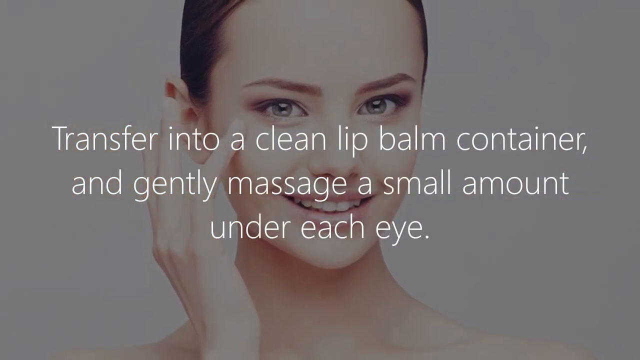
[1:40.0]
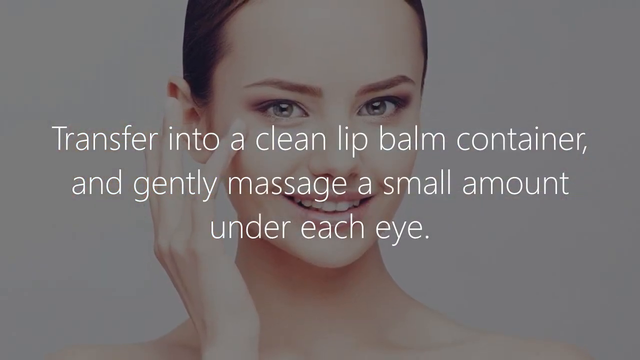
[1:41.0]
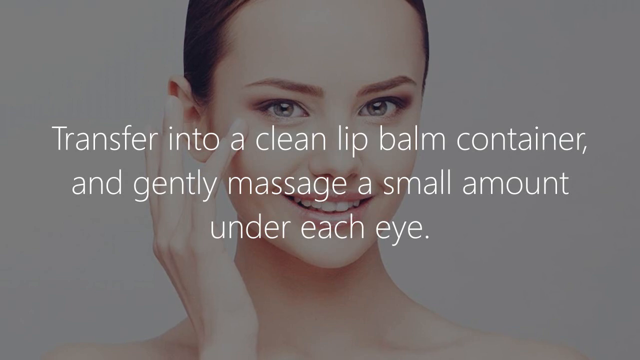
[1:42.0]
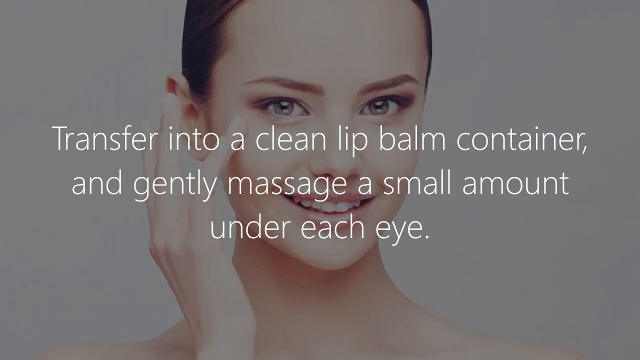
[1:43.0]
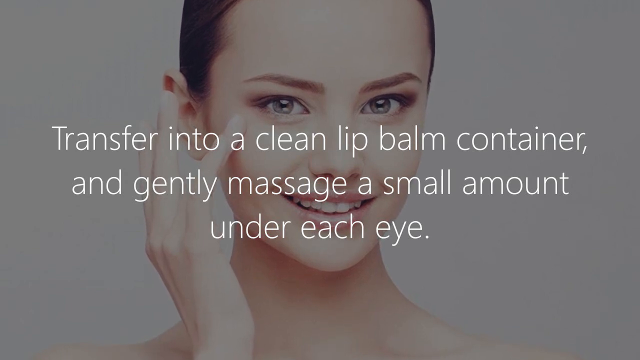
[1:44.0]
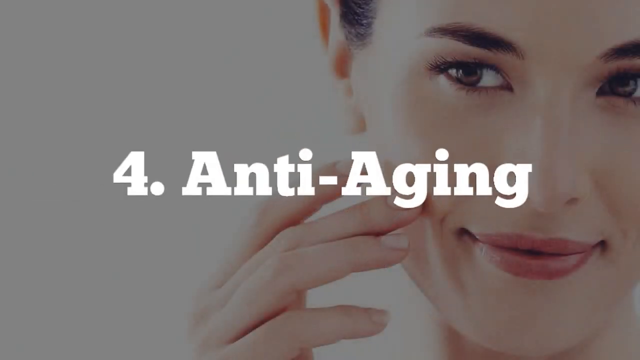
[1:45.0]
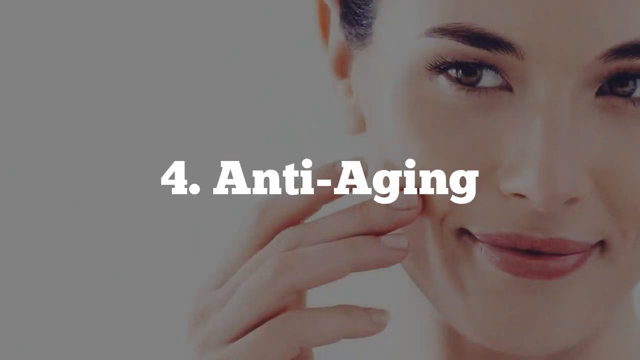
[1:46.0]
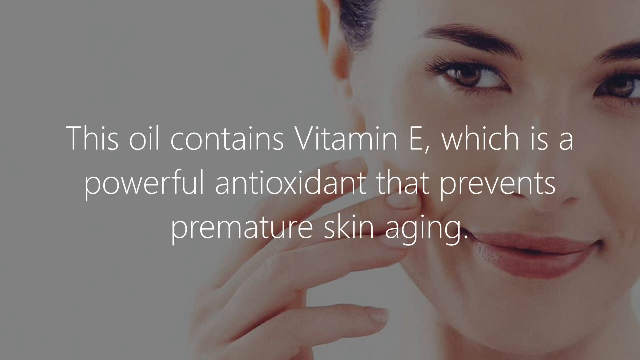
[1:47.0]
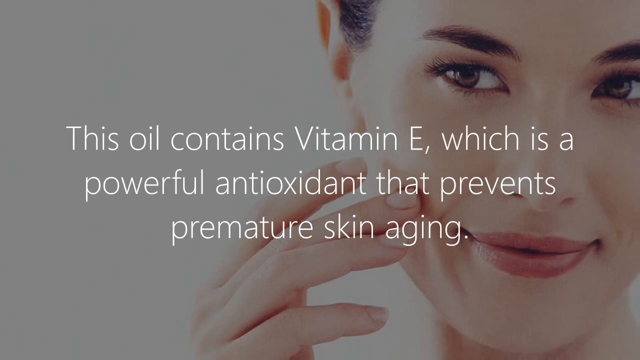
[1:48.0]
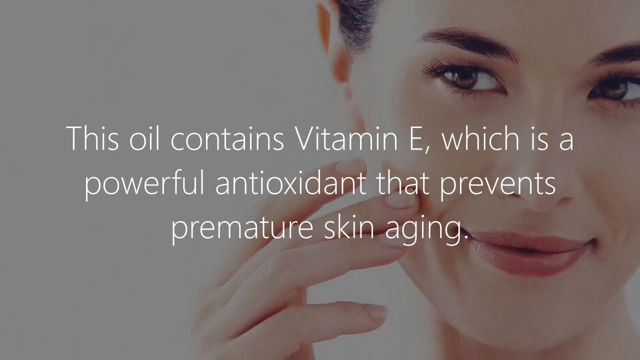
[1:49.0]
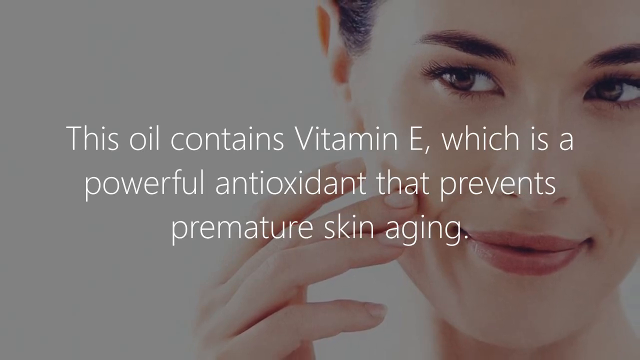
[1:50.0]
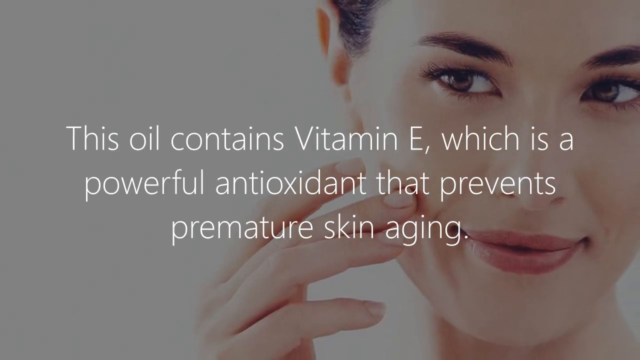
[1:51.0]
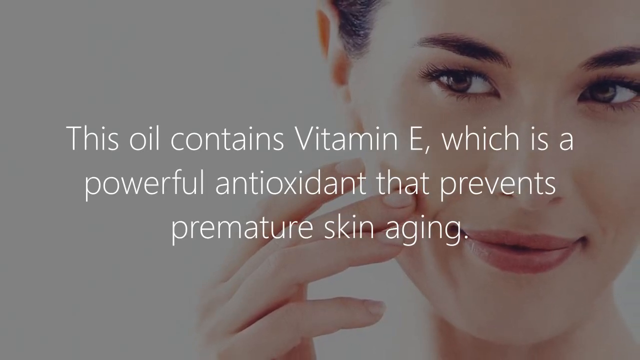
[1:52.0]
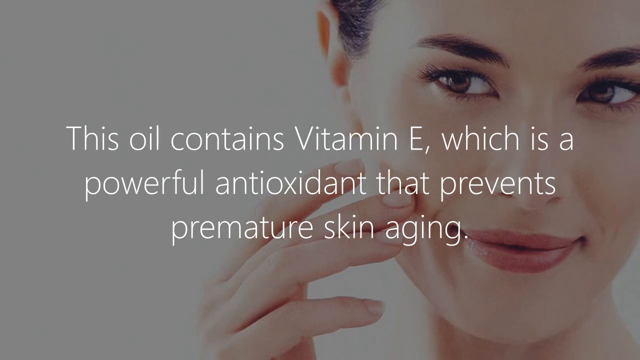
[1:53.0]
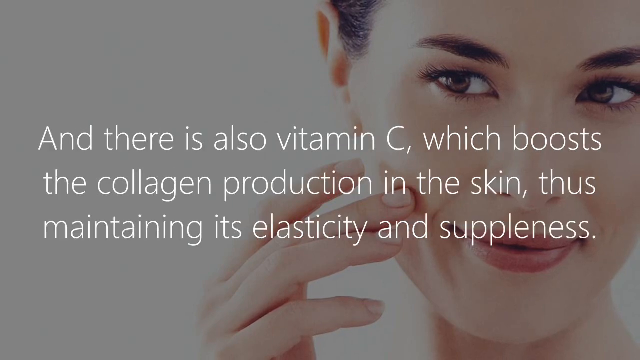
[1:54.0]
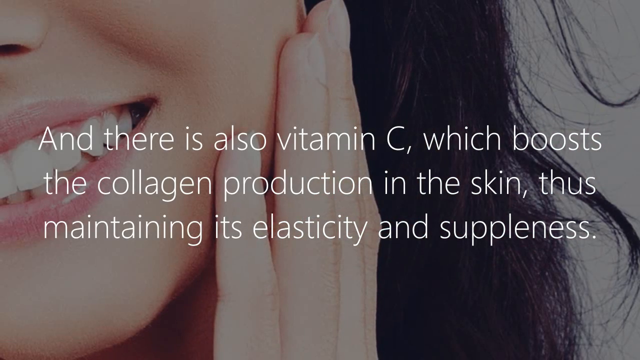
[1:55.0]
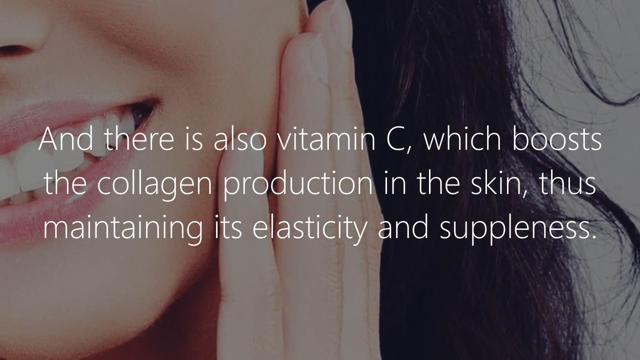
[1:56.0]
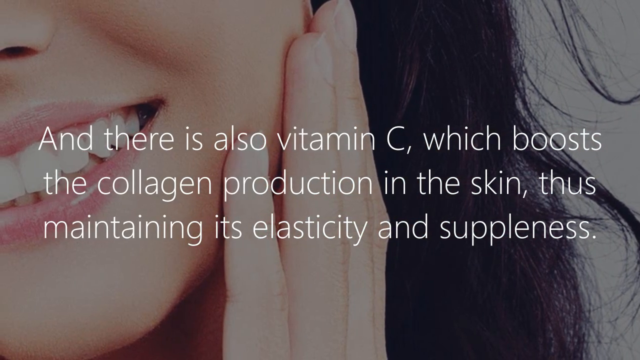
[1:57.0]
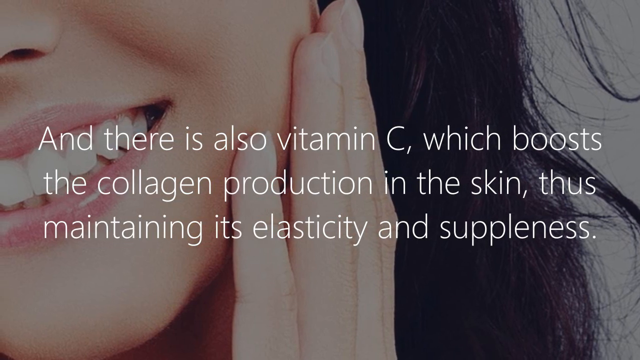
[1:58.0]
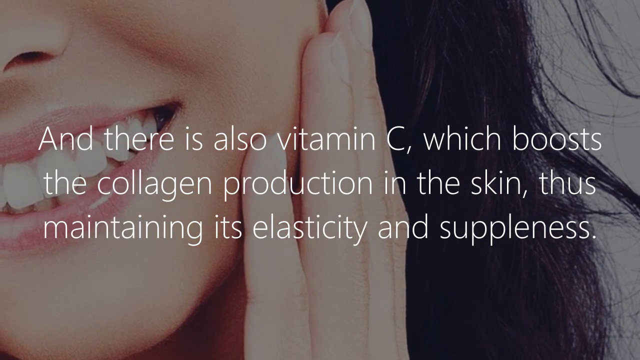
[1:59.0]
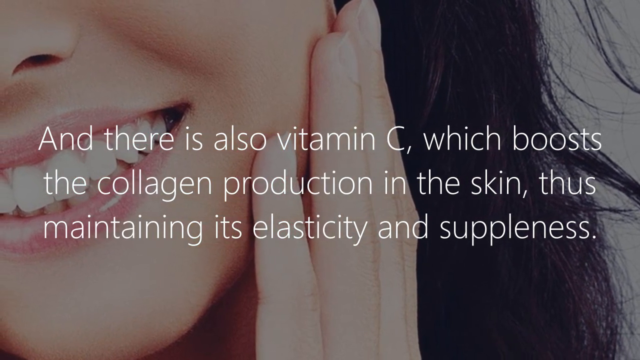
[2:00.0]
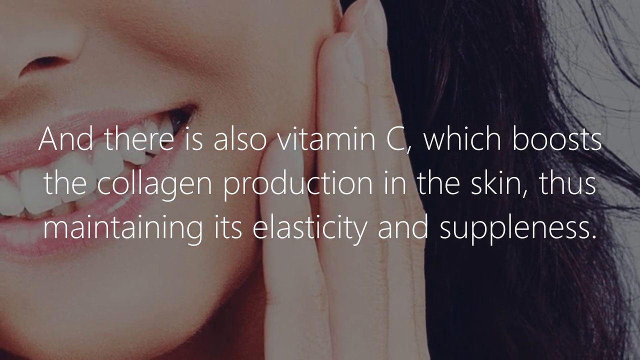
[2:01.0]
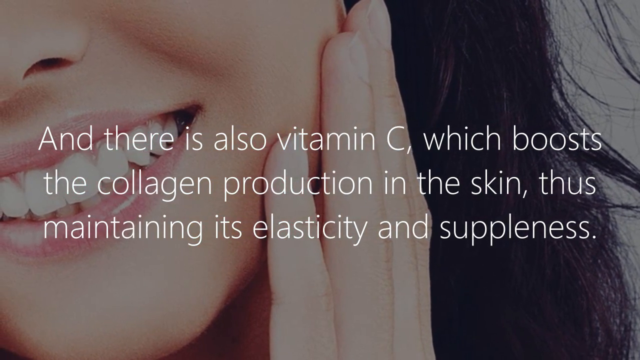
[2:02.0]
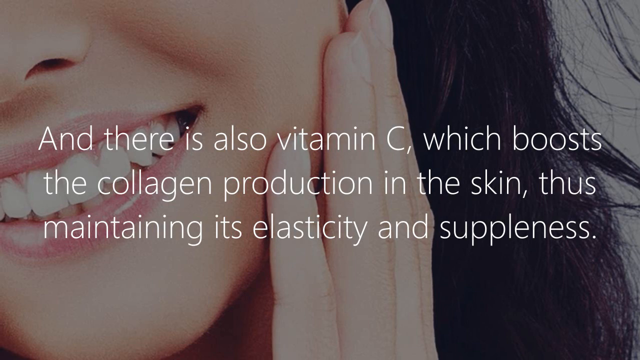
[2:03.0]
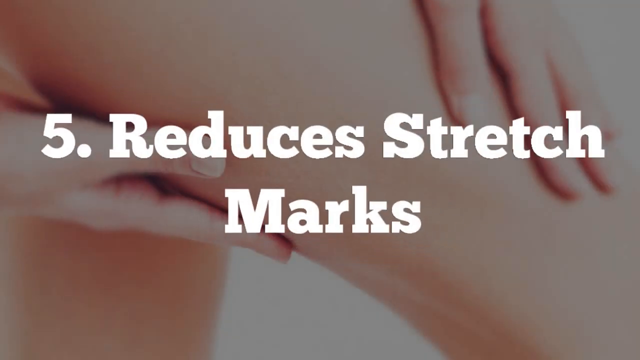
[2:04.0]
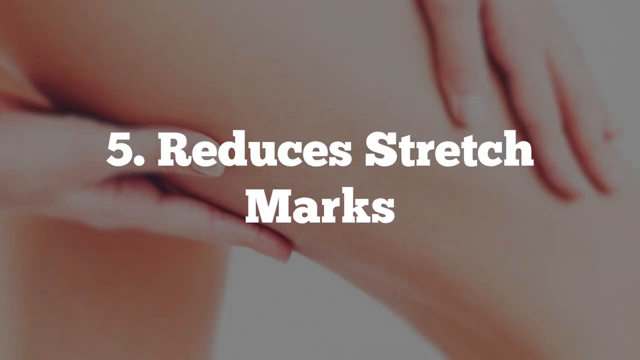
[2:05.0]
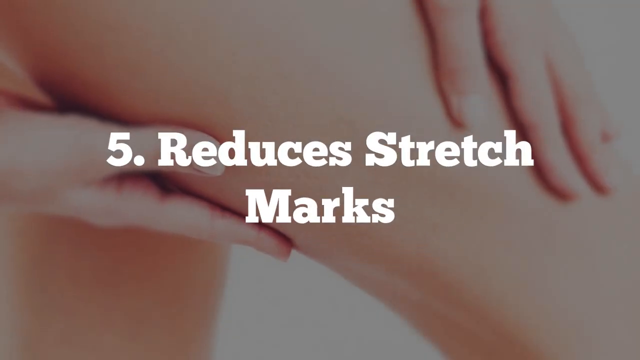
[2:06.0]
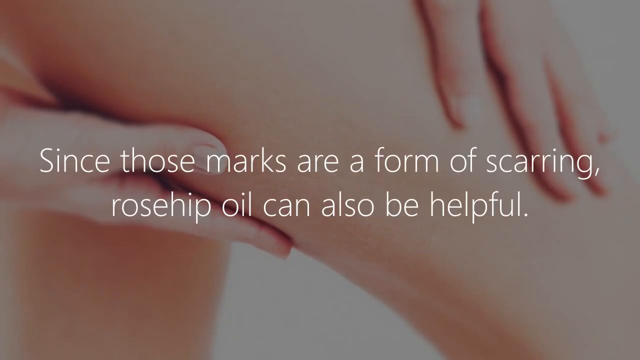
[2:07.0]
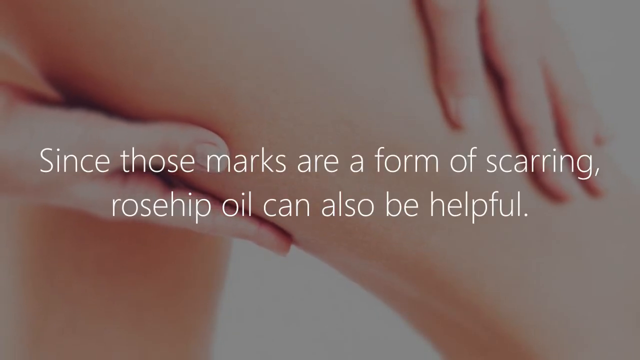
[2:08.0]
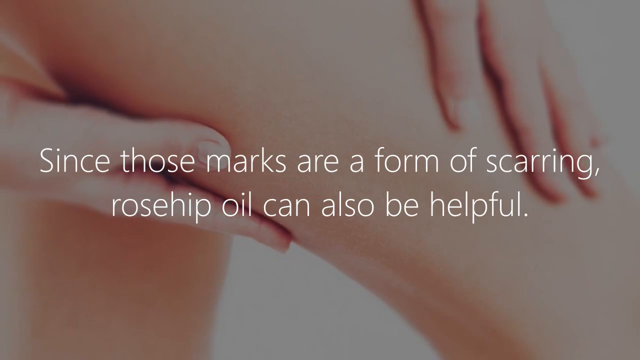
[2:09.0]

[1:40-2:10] The dark-circle recipe continues: five drops of clove oil are added and the ingredients are mixed thoroughly with a whisk, then transferred into a clean lip balm container, and a small amount is gently massaged under each eye.